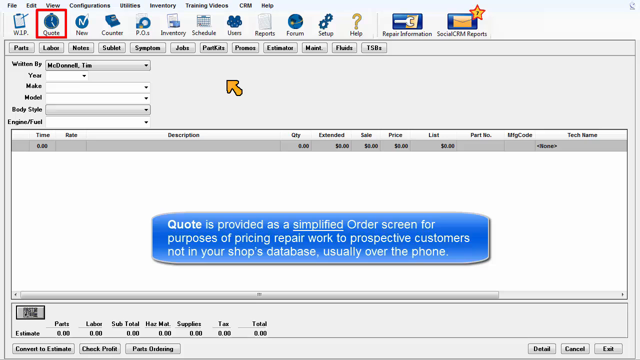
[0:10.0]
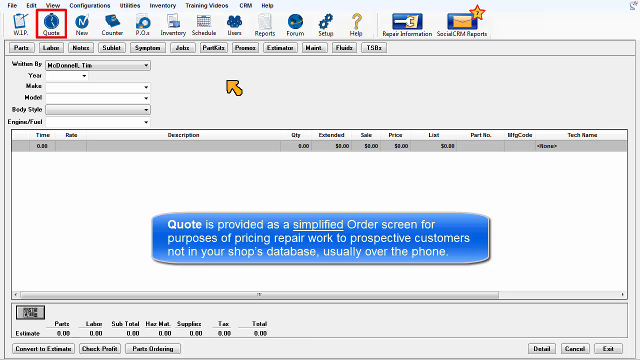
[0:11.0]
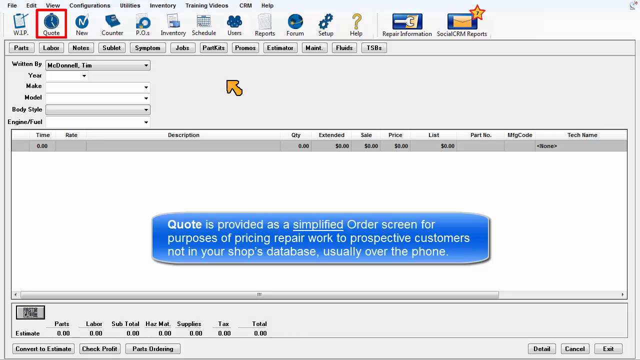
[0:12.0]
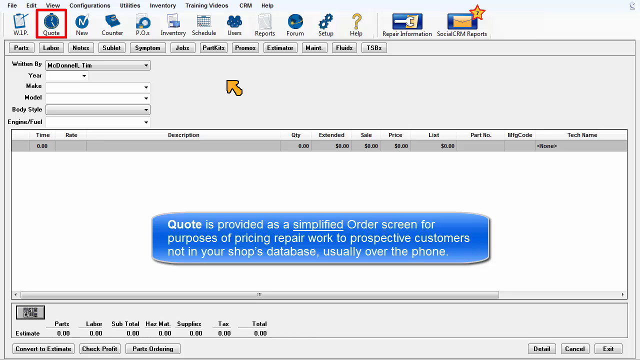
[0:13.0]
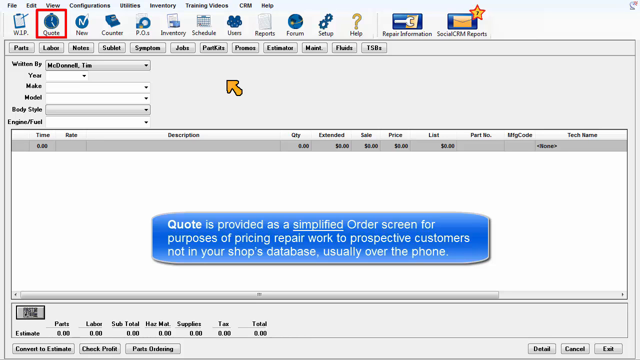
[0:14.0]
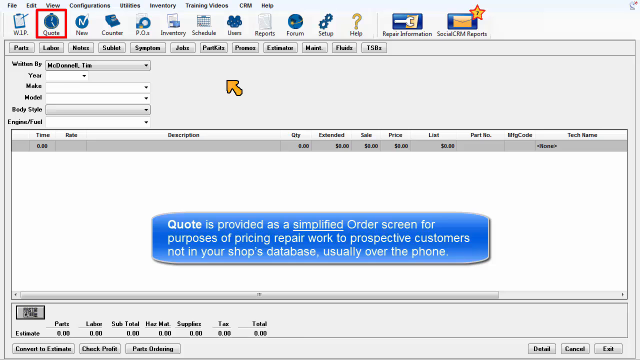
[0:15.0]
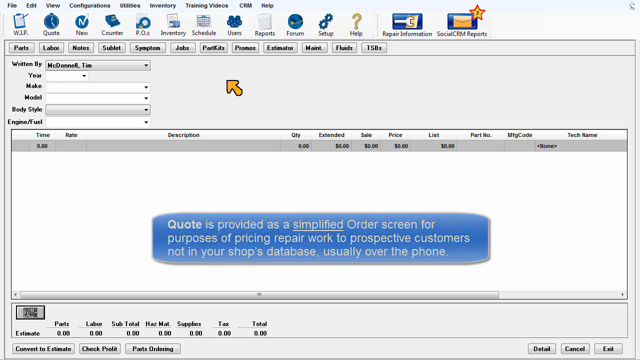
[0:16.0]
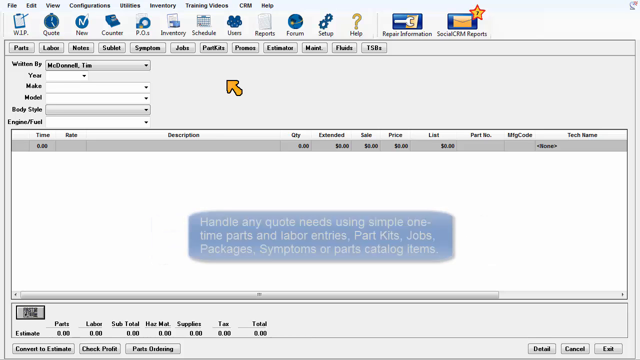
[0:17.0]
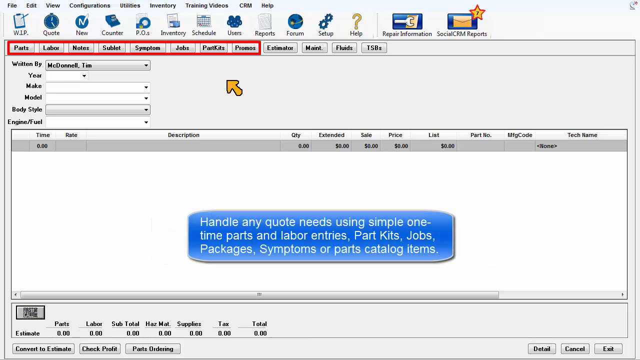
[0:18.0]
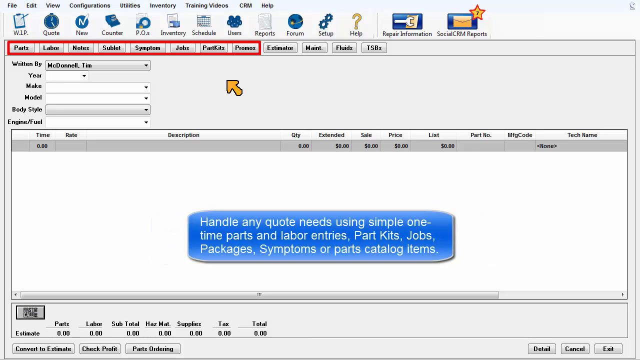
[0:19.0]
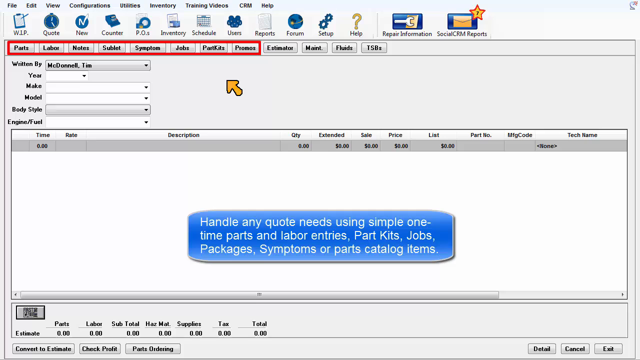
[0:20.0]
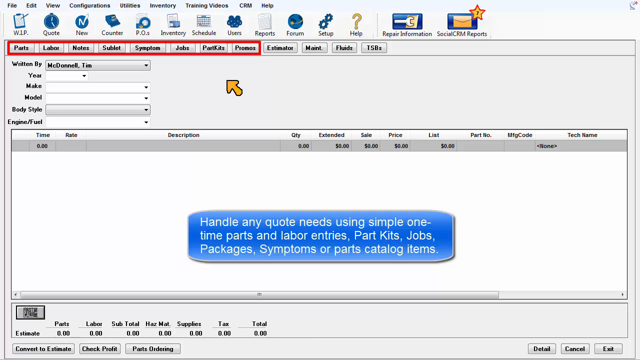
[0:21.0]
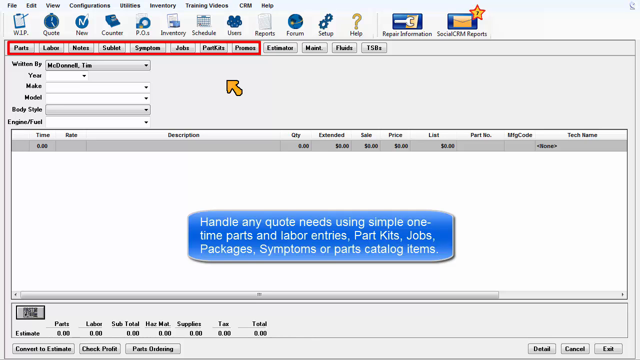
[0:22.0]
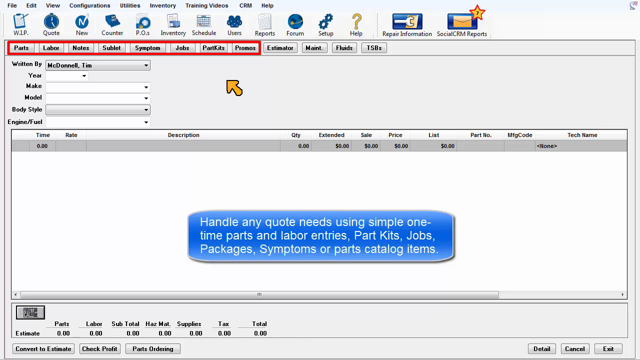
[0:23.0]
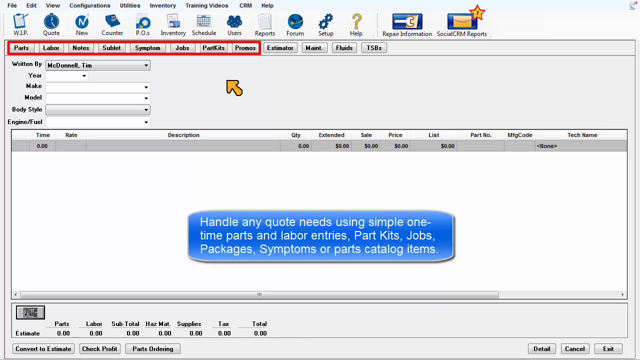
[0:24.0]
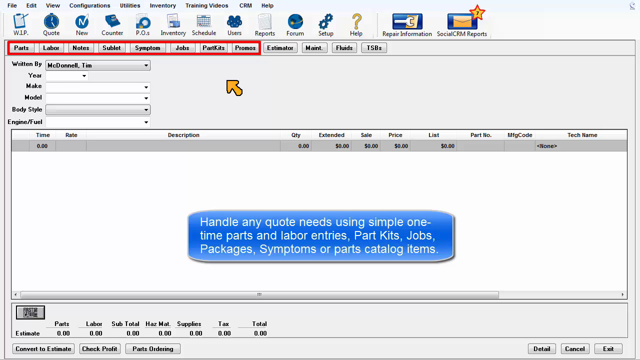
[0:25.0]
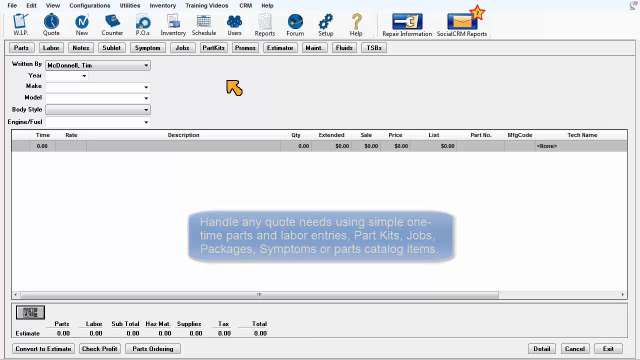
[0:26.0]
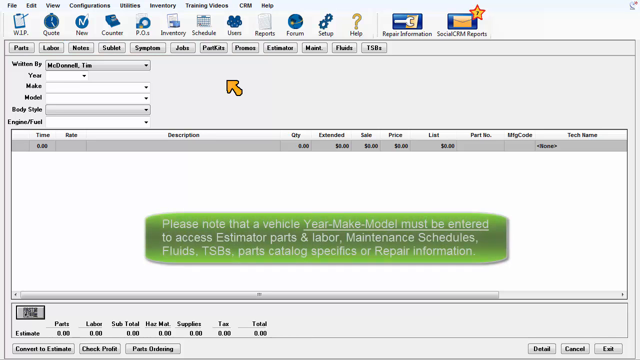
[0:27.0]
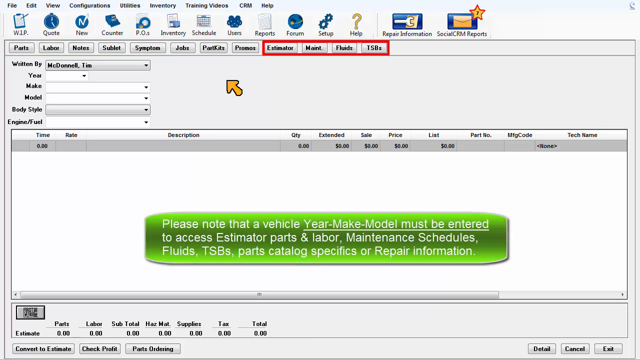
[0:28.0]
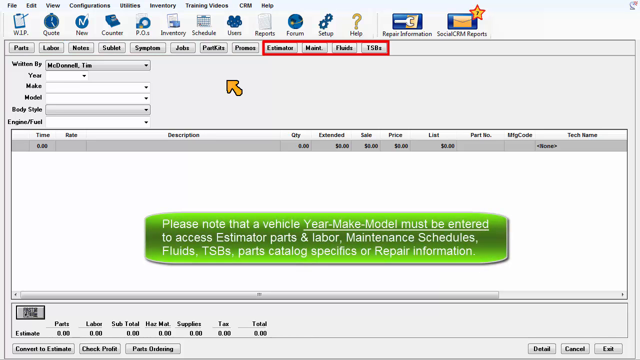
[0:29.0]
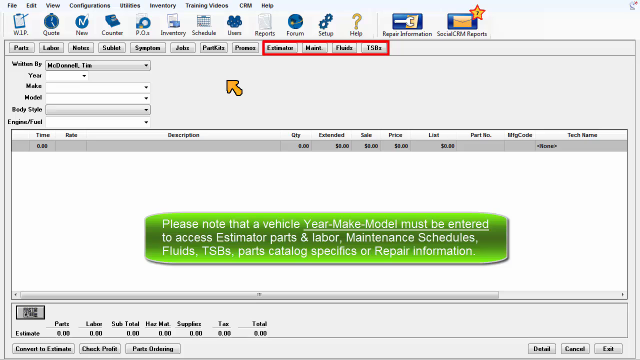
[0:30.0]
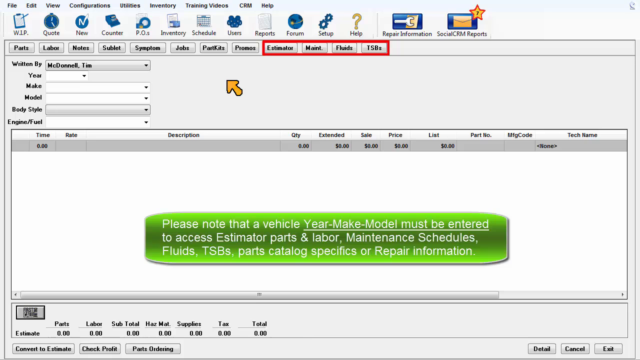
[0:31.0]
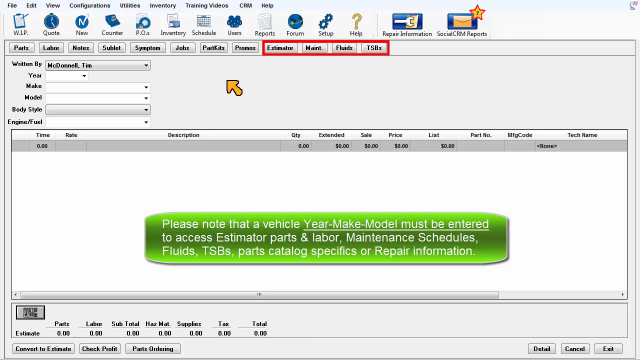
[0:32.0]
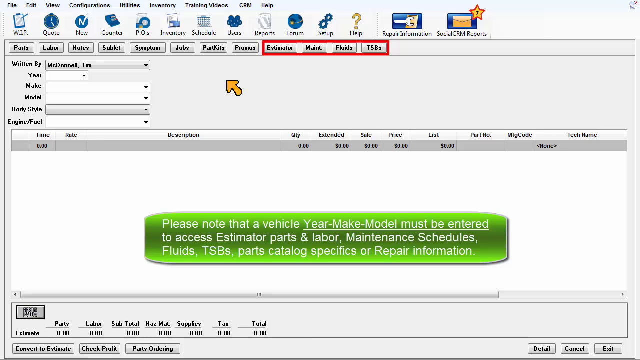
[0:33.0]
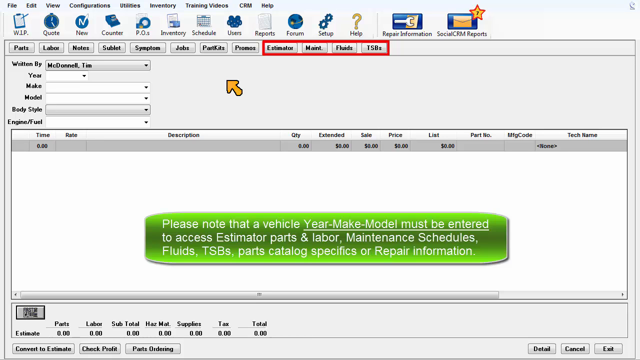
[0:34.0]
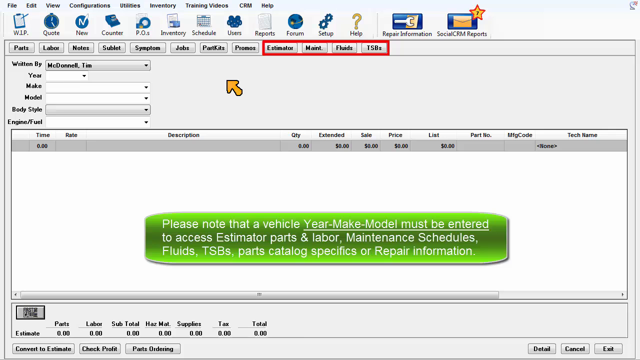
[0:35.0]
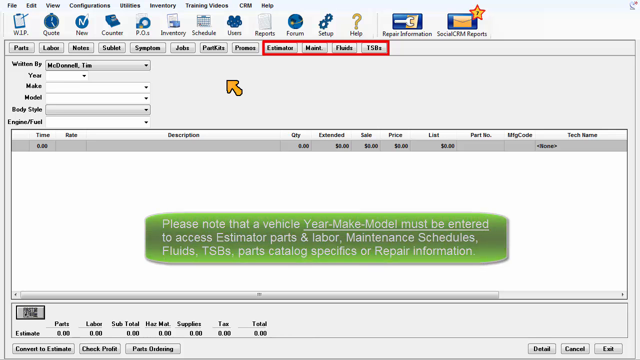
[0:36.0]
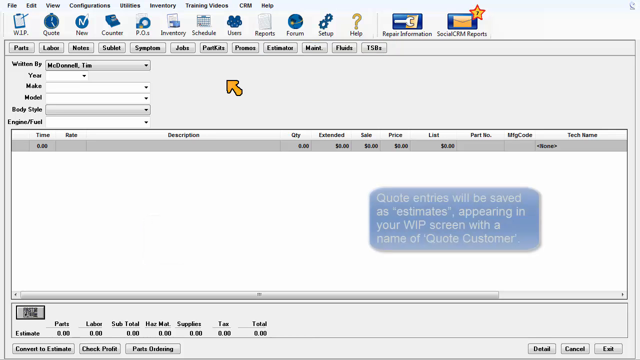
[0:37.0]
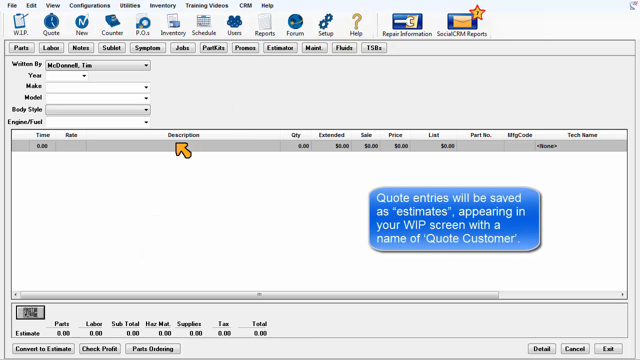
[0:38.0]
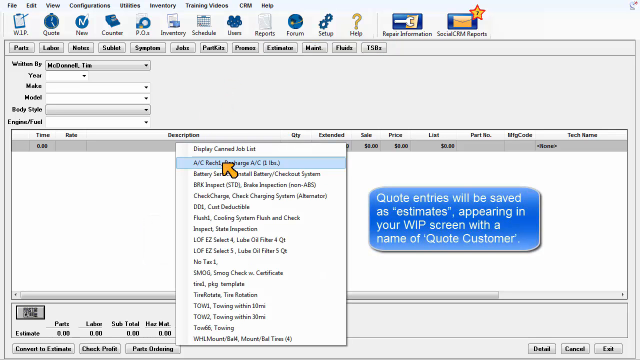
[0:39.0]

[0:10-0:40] A website appears with several menu options along the top, such as "File," "Edit," "Notes," "sublet," "system," "symptom," "jobs" and "TSBs." Arrow icons are visible, along with the words "WIP," "quote," "new," "counter," "POS," "inventory," "schedule," "users," "reports," "forum," "setup" and "help." The name field "written by Tim McDowell" appears in white text with a blue border. Text reads "Quote is provided as a simplified order screen for purpose of pricing repair work to prospective customers, not in your shop's database, use over the phone." As the website is navigated, several options are highlighted in turn, such as parts, labor, notes, sublet, symptom and jobs. A green note then appears reading "please note that the vehicle year make model must be entered to access estimated parts and labor and maintenance schedules, fluids, TSBs, parts catalogs, specifics, or repair information."